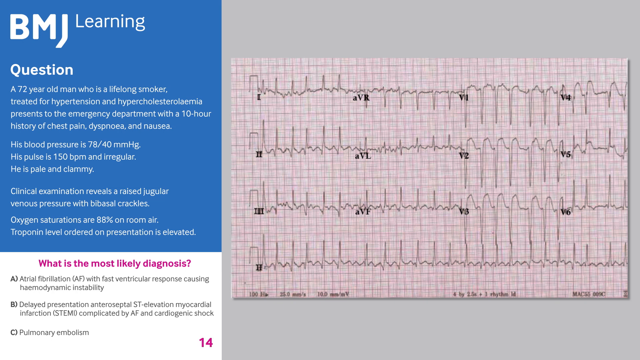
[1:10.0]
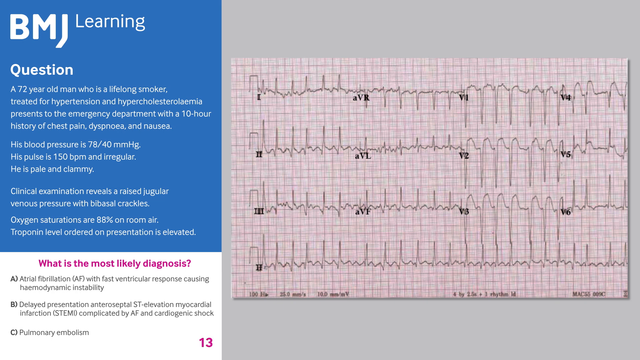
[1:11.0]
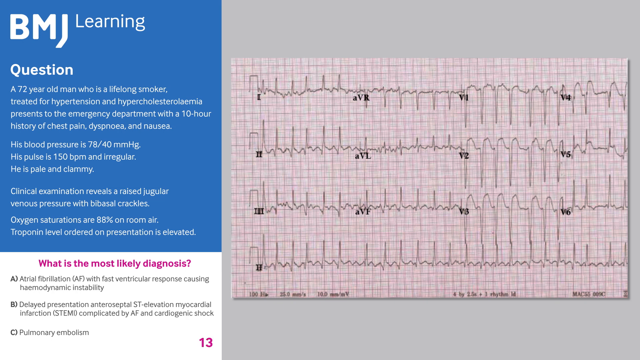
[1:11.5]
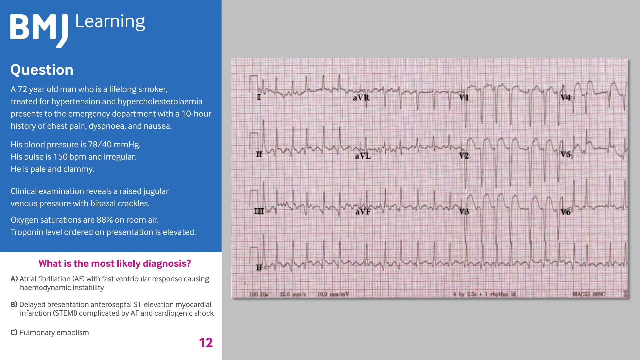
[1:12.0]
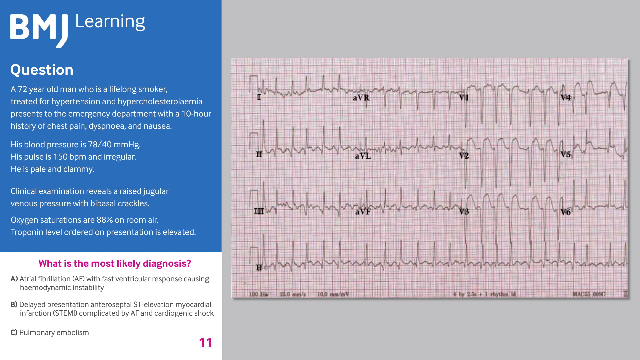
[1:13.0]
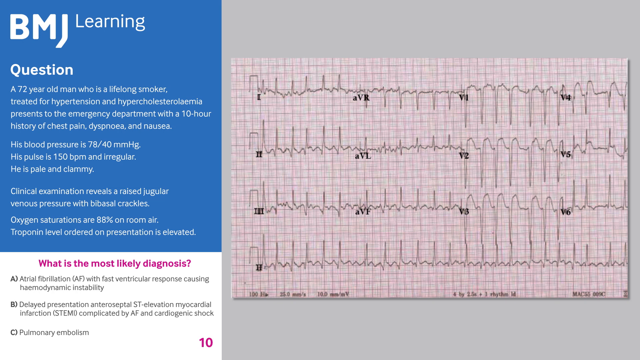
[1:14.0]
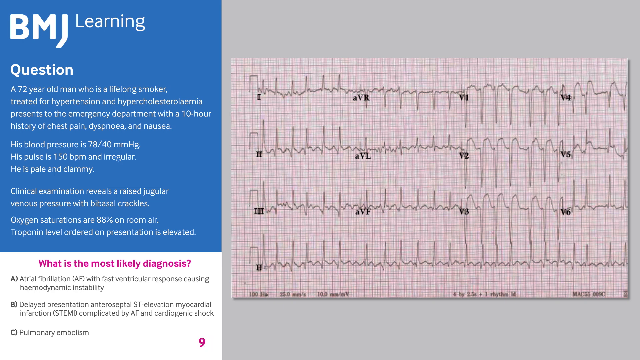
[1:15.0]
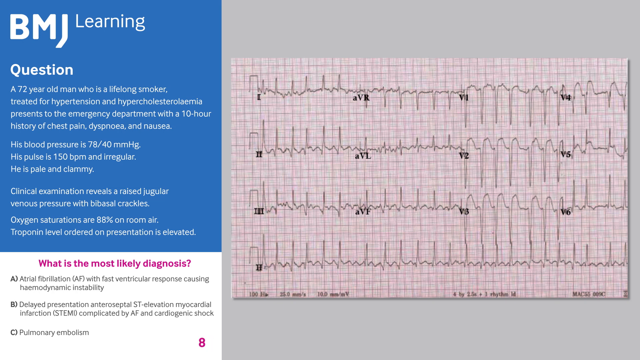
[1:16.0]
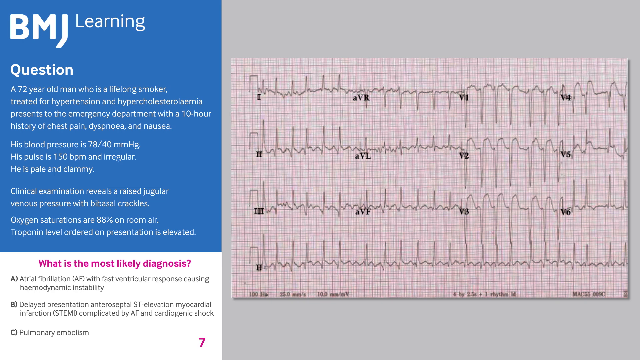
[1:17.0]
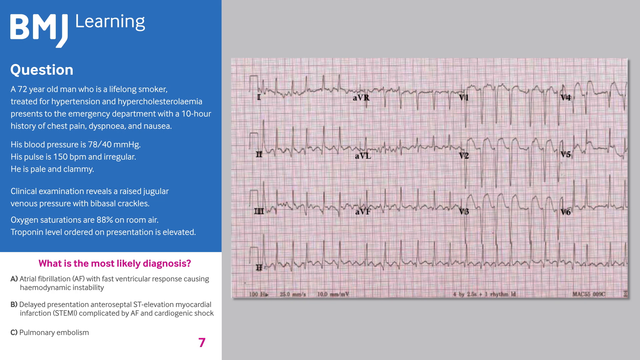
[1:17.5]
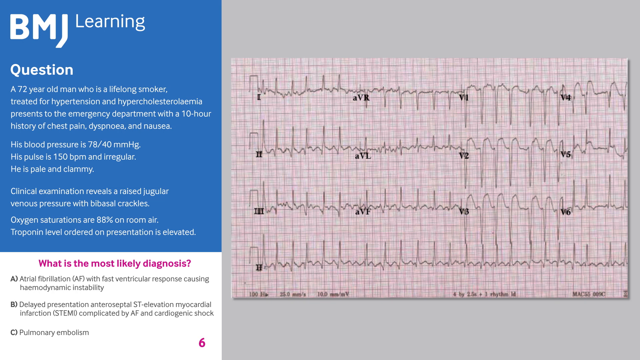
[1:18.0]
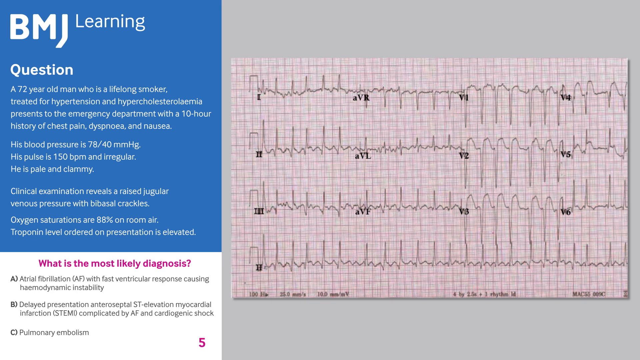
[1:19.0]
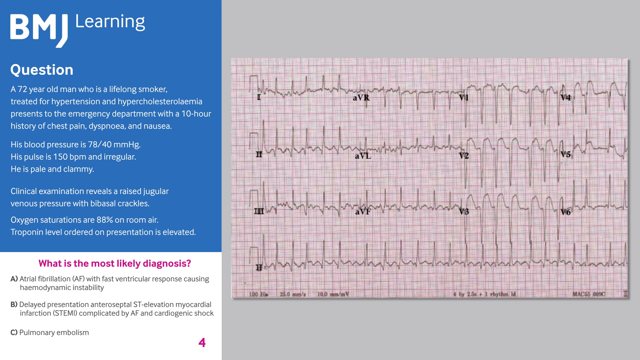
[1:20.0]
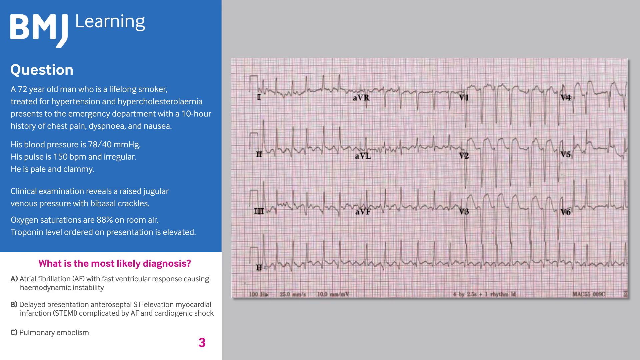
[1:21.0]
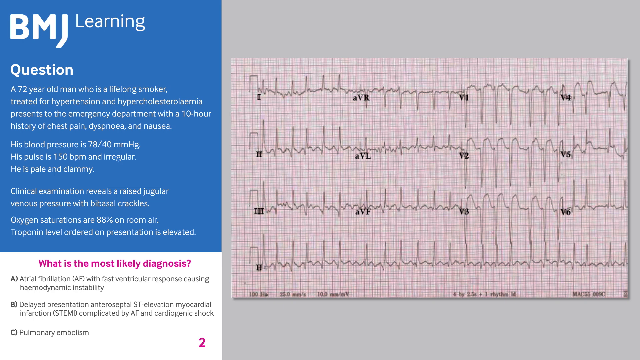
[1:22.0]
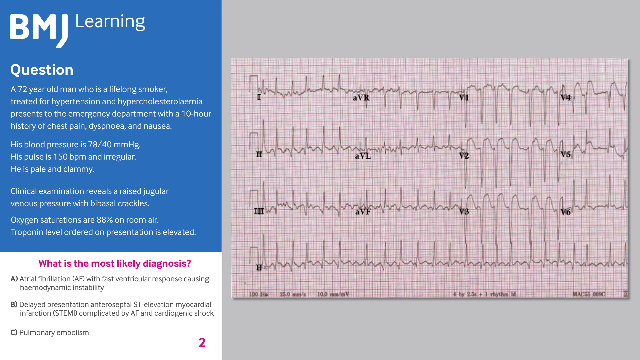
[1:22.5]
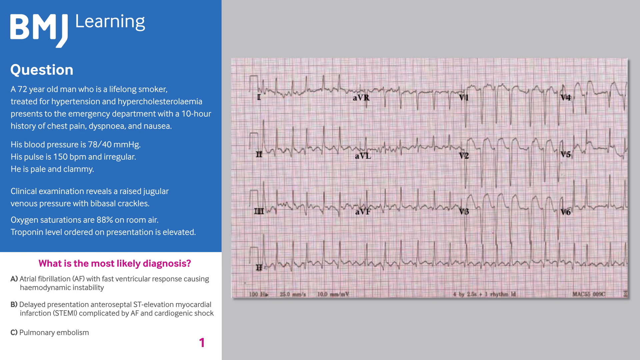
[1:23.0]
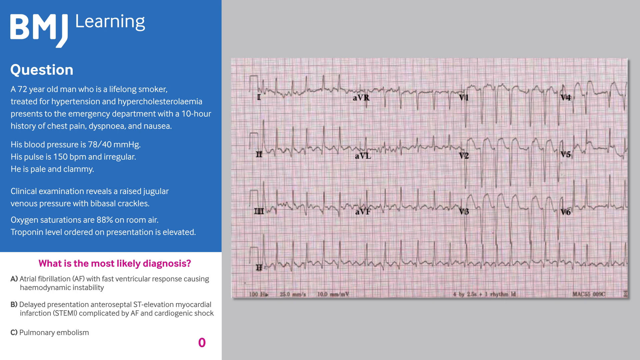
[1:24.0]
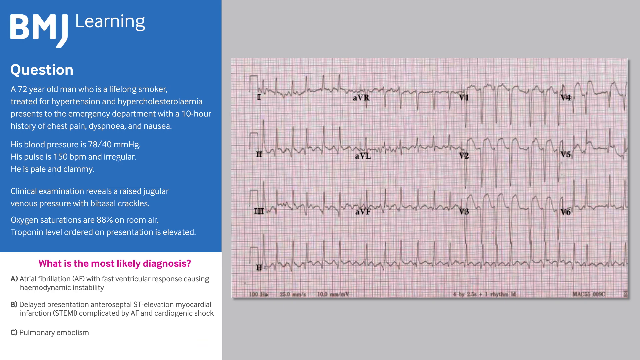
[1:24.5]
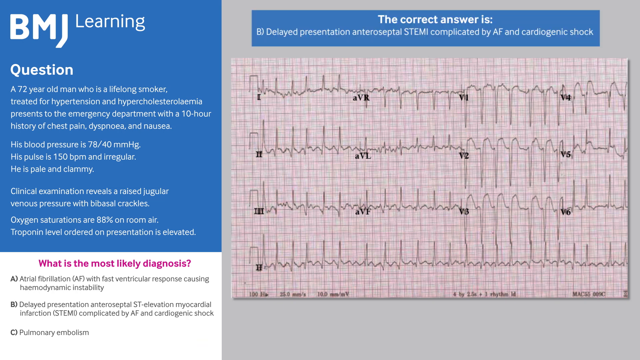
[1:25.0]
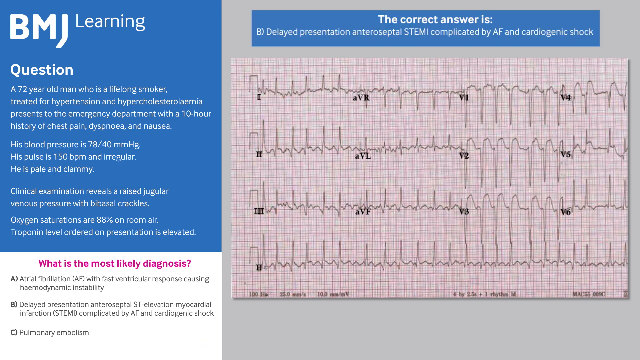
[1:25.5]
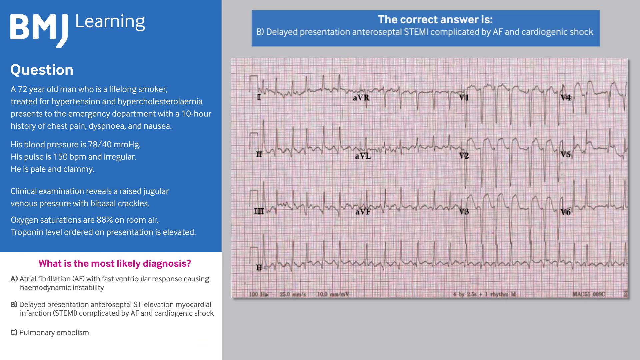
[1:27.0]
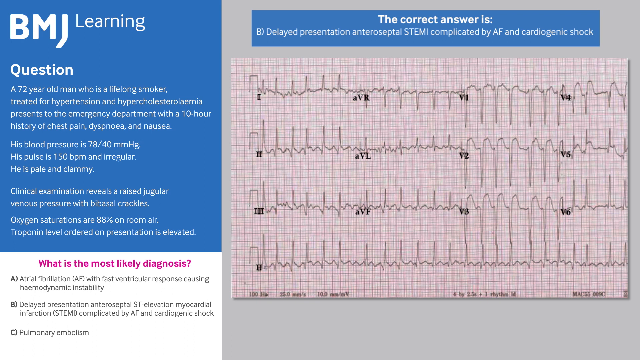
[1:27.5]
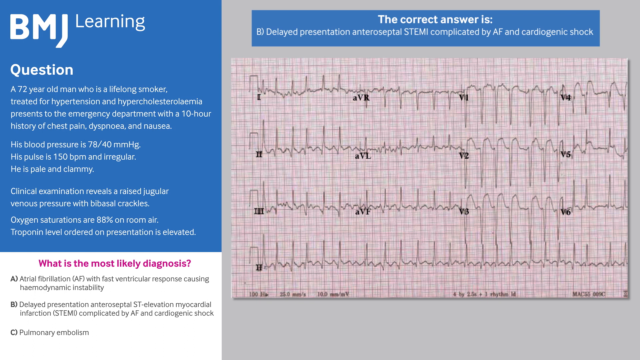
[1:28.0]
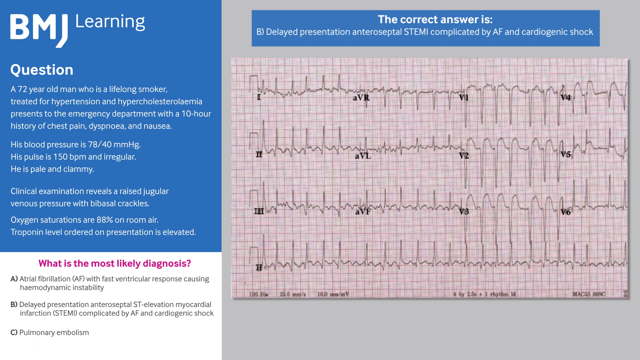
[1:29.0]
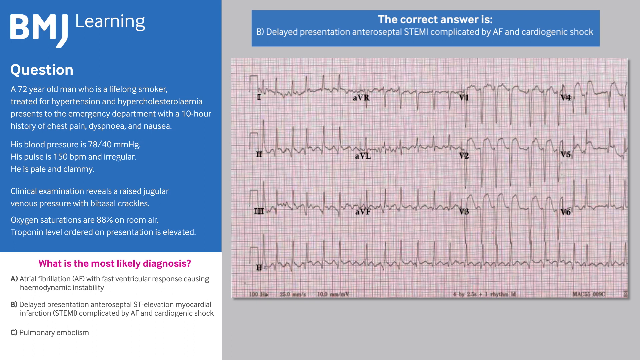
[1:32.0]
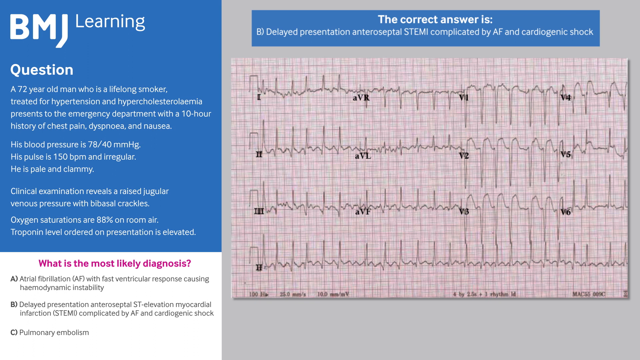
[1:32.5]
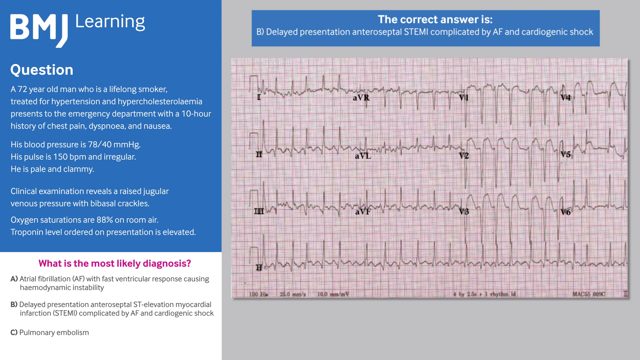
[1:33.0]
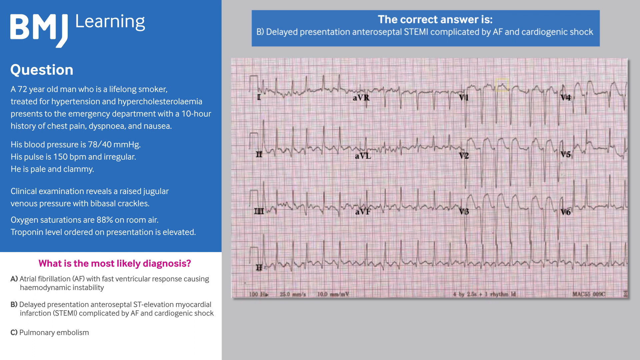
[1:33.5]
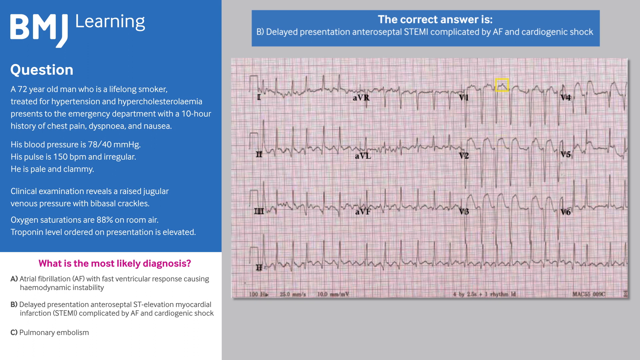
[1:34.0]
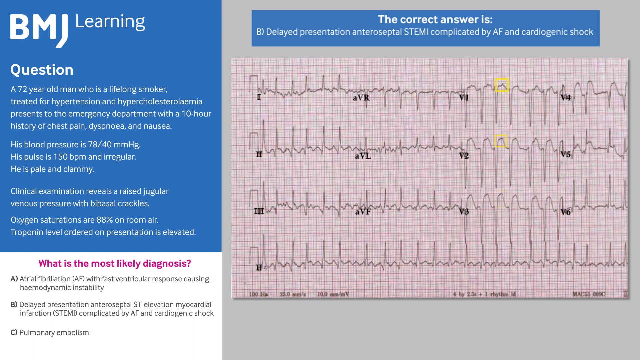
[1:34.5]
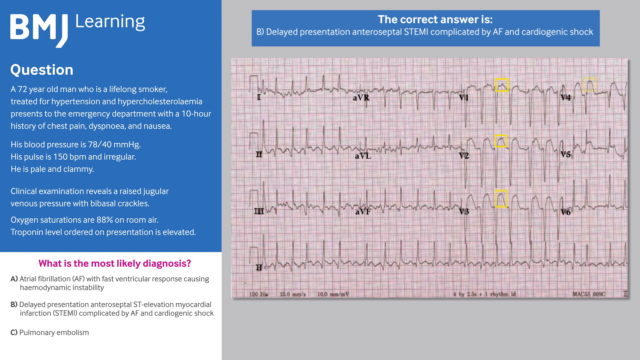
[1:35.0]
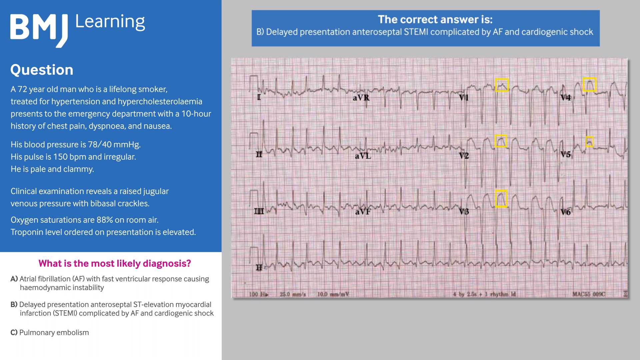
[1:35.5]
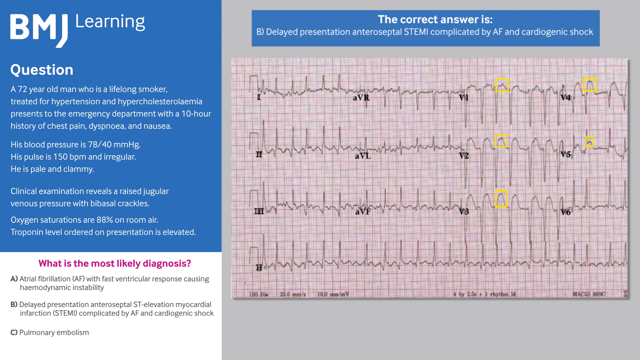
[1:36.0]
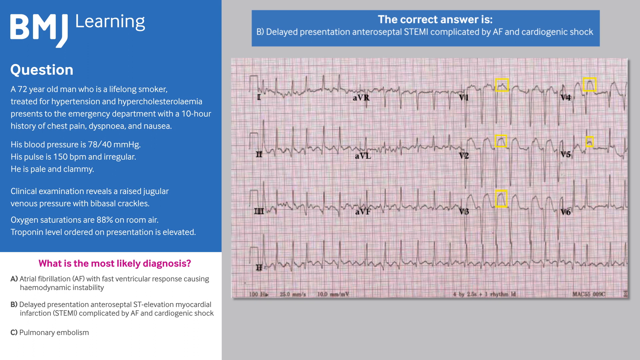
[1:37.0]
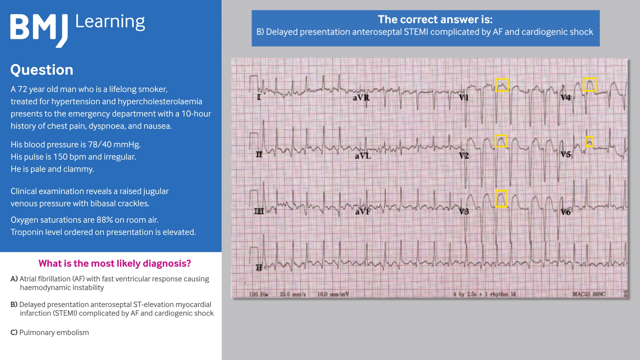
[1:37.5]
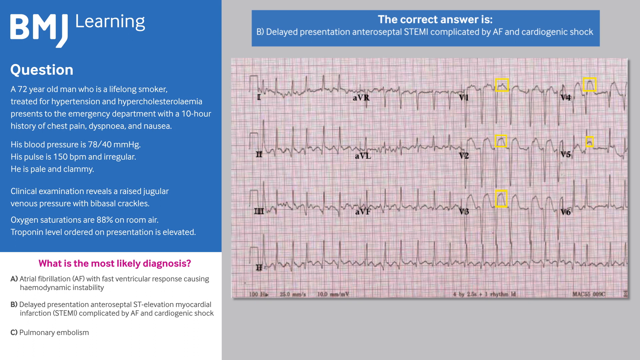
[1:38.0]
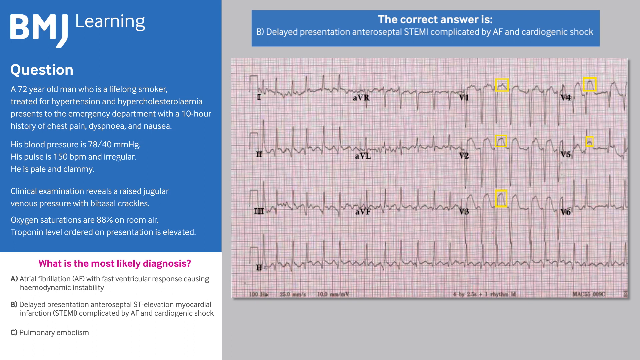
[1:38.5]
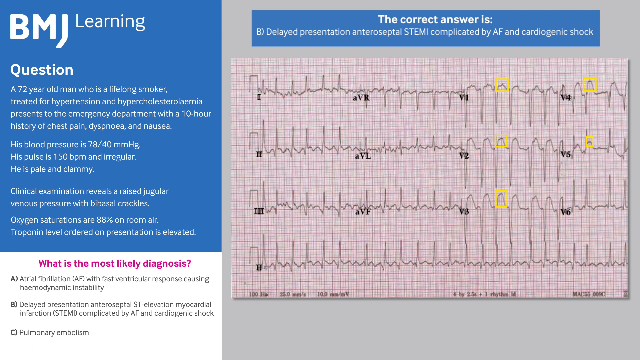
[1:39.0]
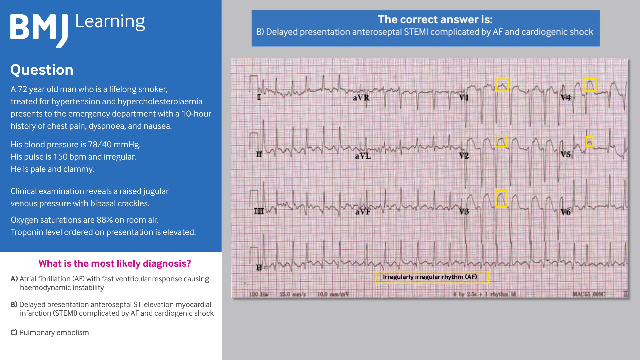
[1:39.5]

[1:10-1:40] One quarter of the screen is mostly blue, three quarters of the way down, with white writing; the bottom part of that section is white with purple and black writing. The remaining three quarters of the screen show the ECG results, with the Roman numerals one, two, three and four in one part, AVR, AVL and AVF in black in another, and V1 through V6 in another. There is also writing at the bottom that is hard to make out. A countdown in purple runs in the white section from 10 down to 0. Then the correct answer appears: "the correct answer is B, delayed presentation", ending "and cardiogenic shock", the answer to the question of the most likely diagnosis.